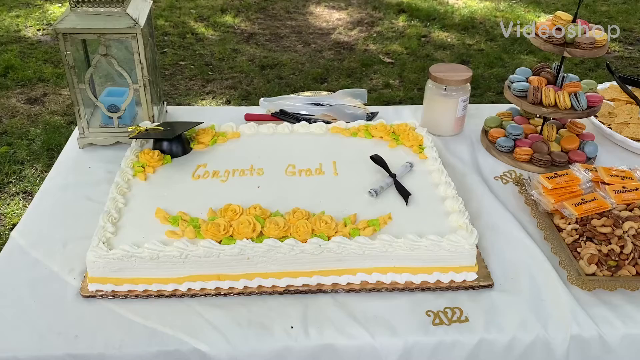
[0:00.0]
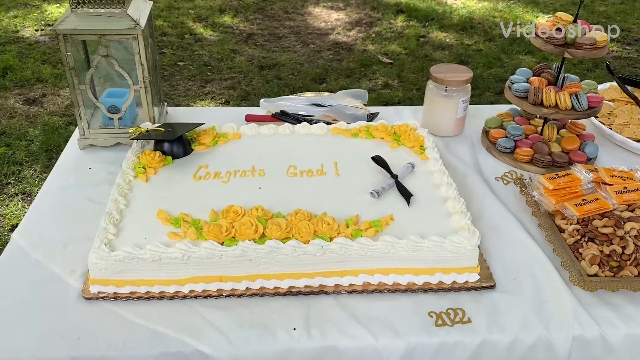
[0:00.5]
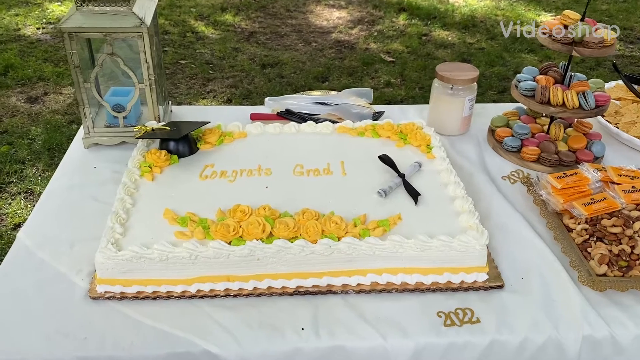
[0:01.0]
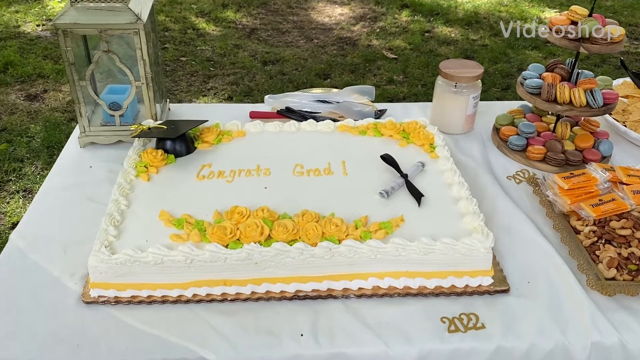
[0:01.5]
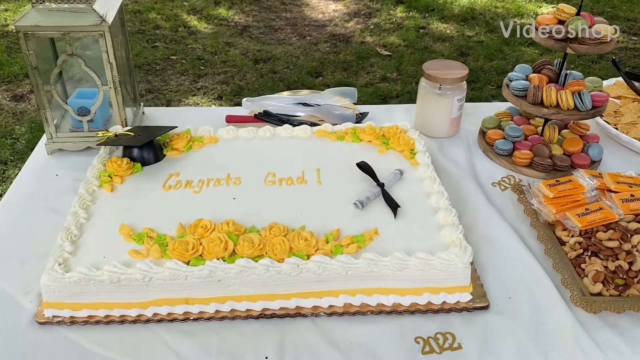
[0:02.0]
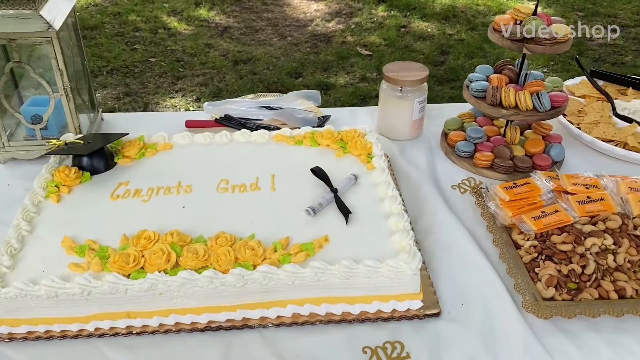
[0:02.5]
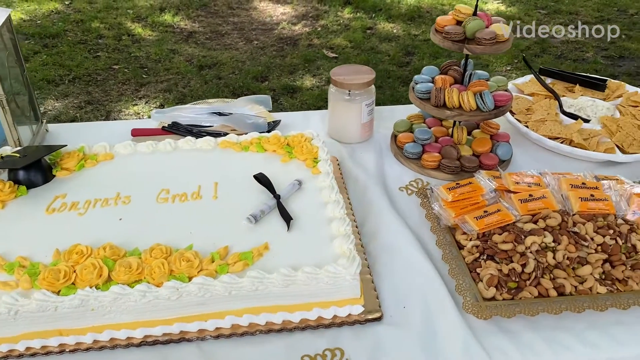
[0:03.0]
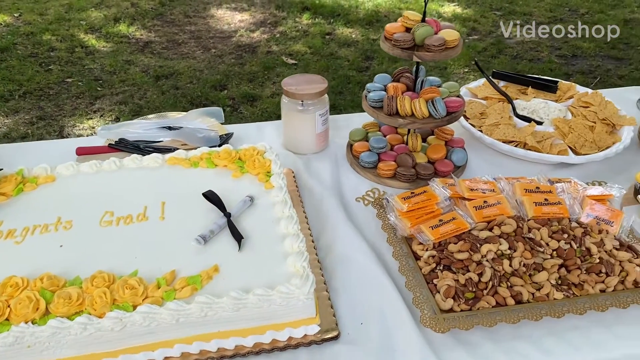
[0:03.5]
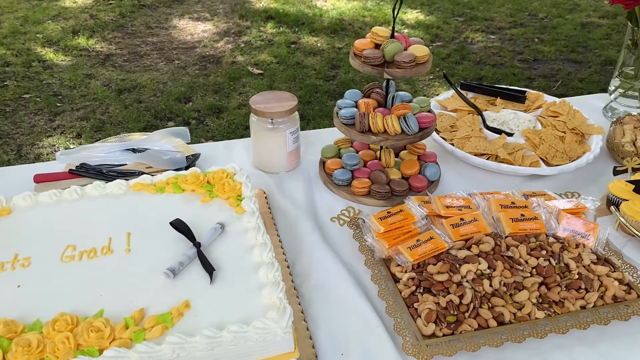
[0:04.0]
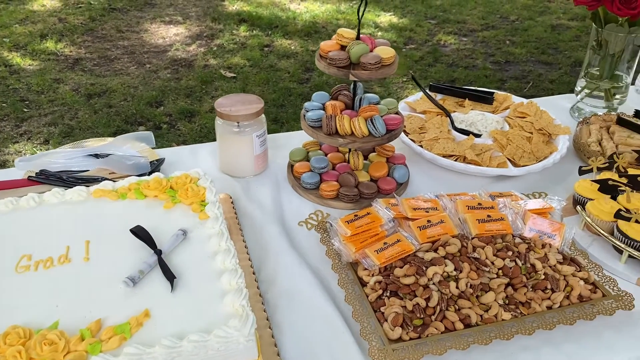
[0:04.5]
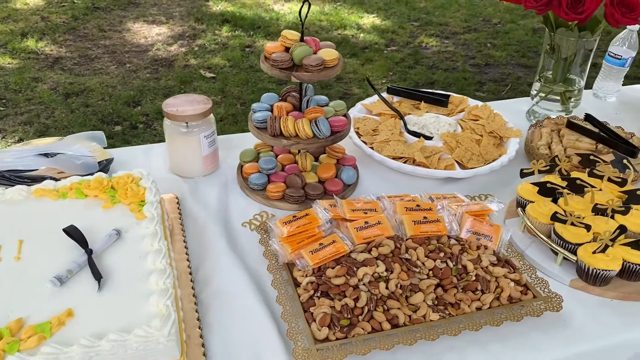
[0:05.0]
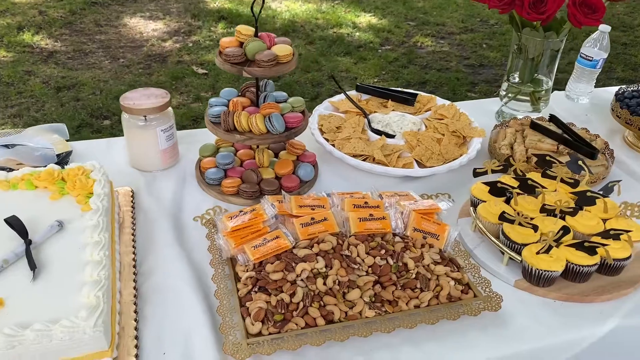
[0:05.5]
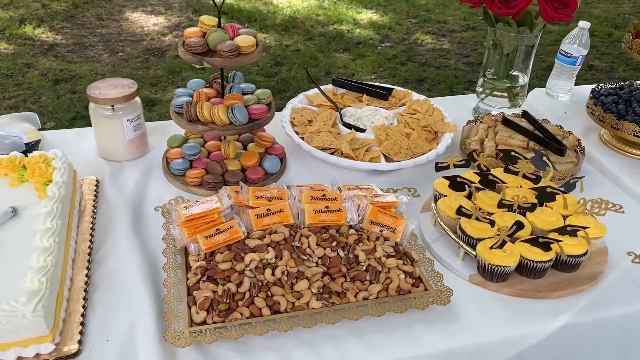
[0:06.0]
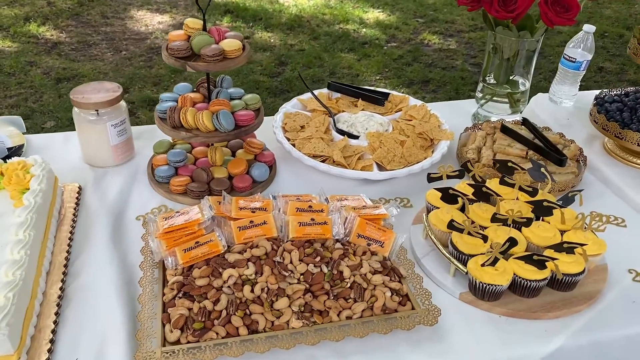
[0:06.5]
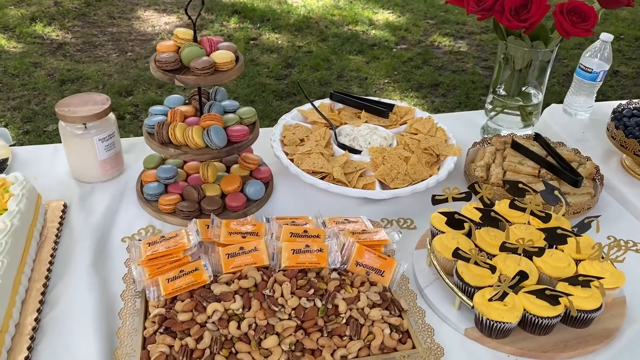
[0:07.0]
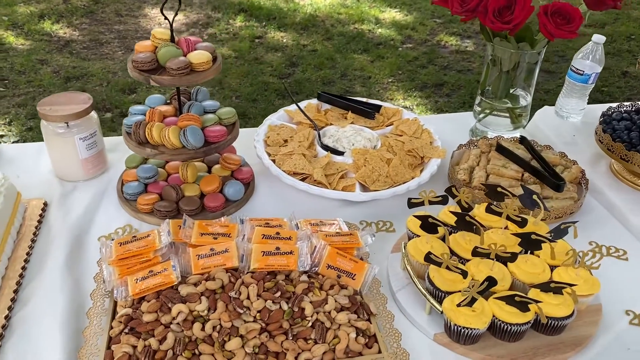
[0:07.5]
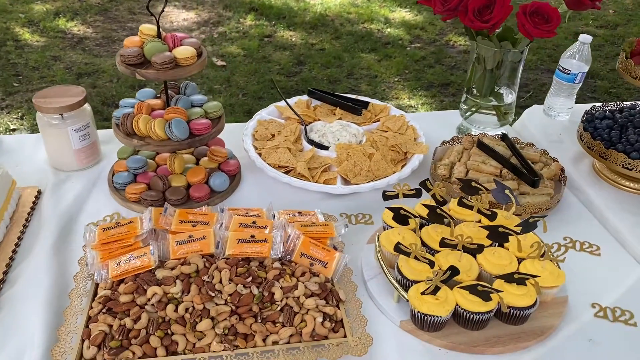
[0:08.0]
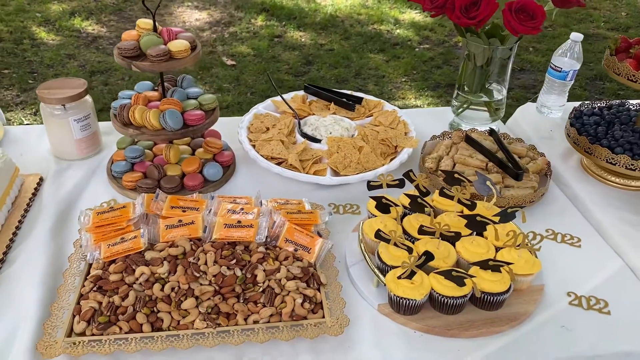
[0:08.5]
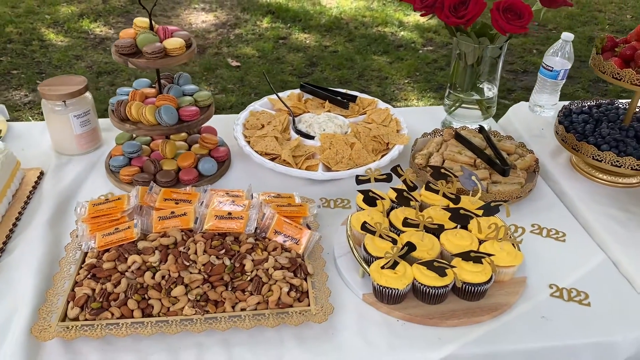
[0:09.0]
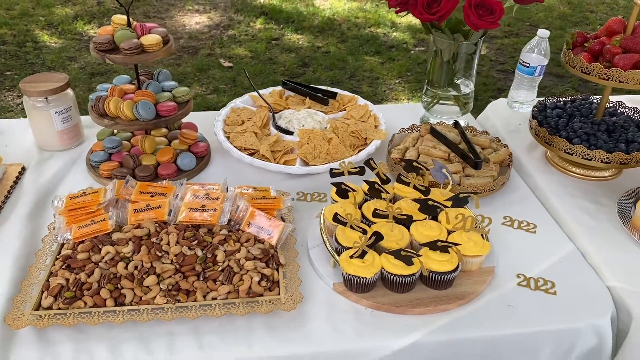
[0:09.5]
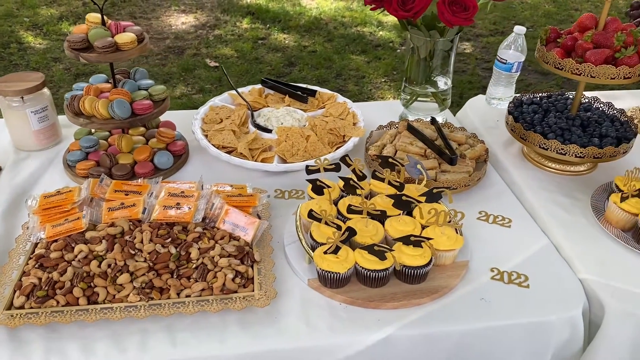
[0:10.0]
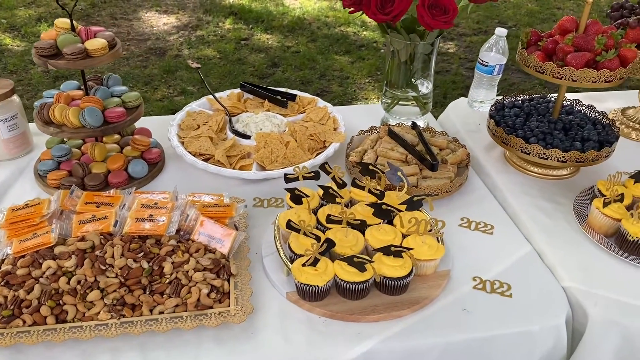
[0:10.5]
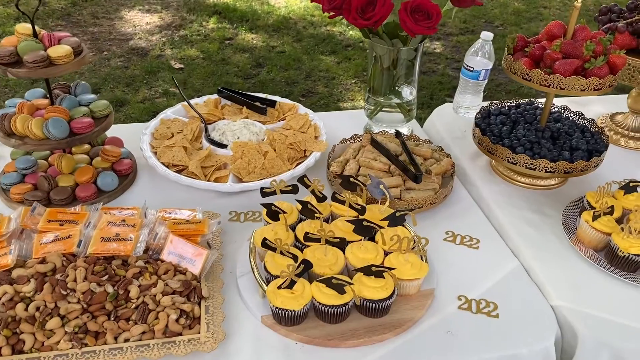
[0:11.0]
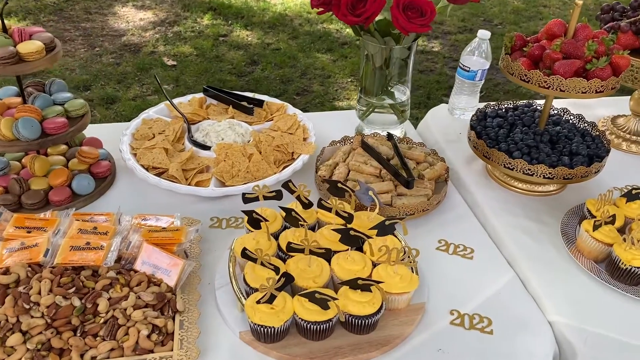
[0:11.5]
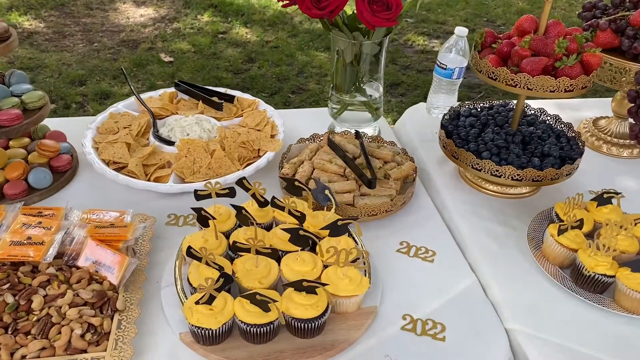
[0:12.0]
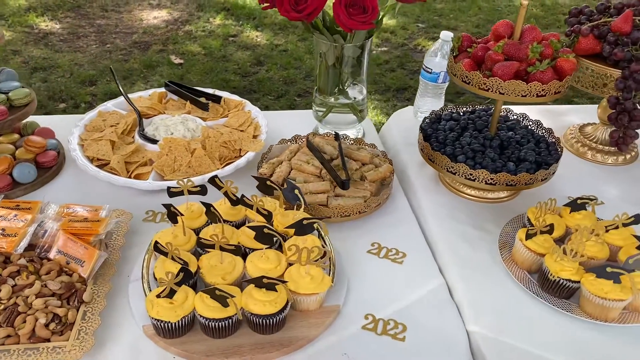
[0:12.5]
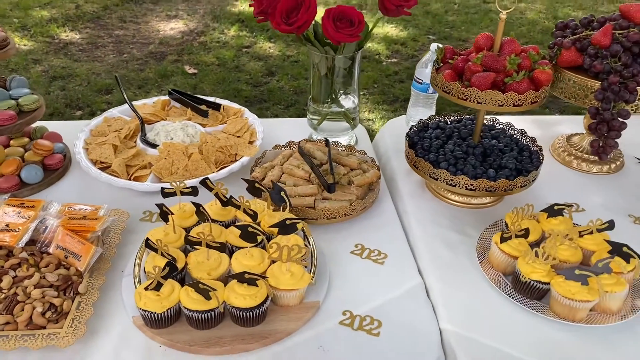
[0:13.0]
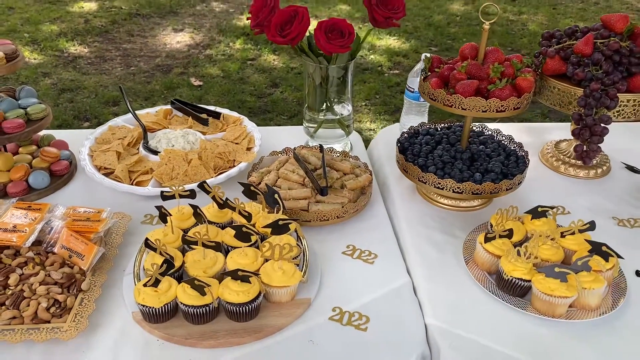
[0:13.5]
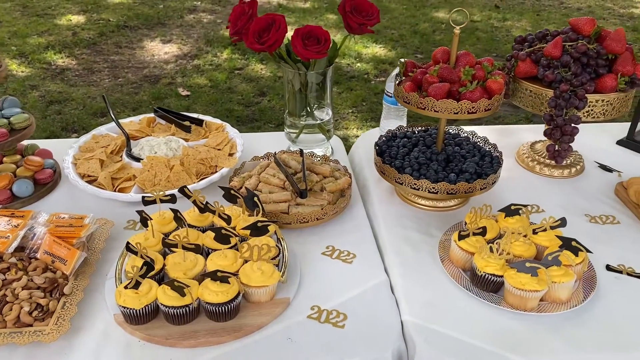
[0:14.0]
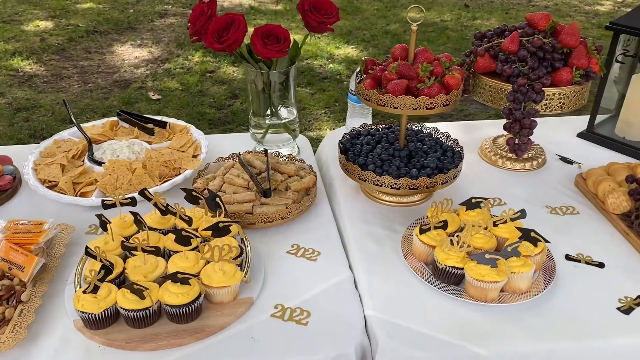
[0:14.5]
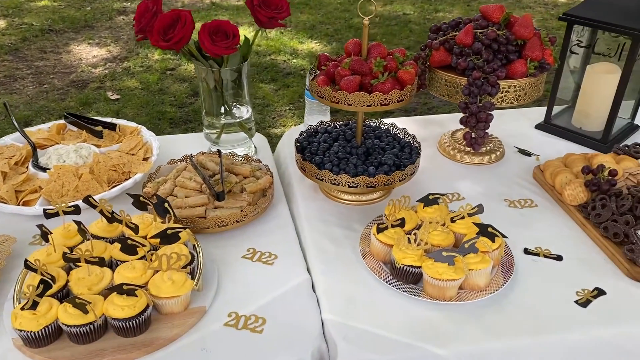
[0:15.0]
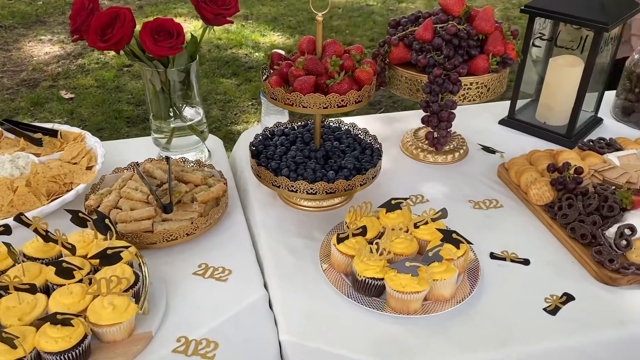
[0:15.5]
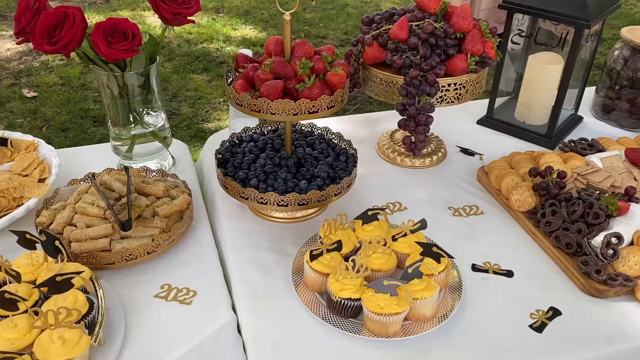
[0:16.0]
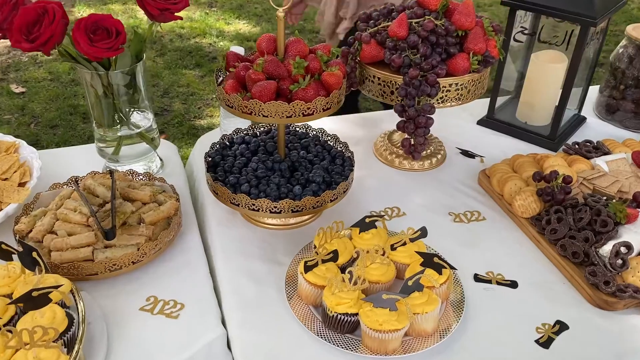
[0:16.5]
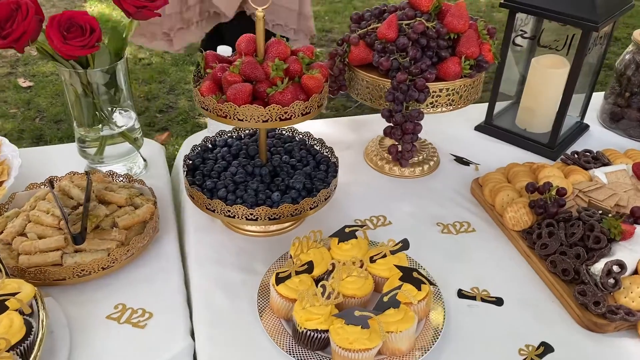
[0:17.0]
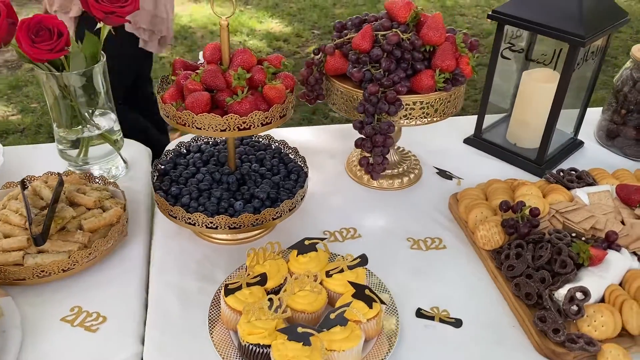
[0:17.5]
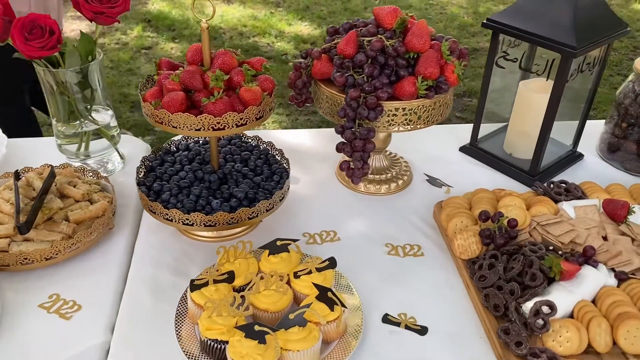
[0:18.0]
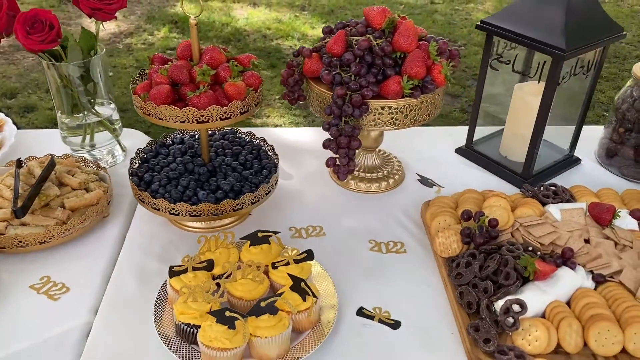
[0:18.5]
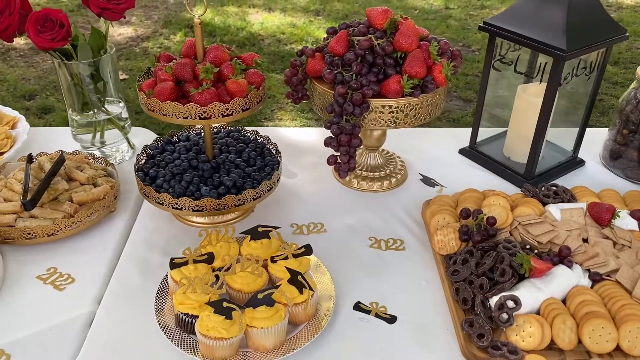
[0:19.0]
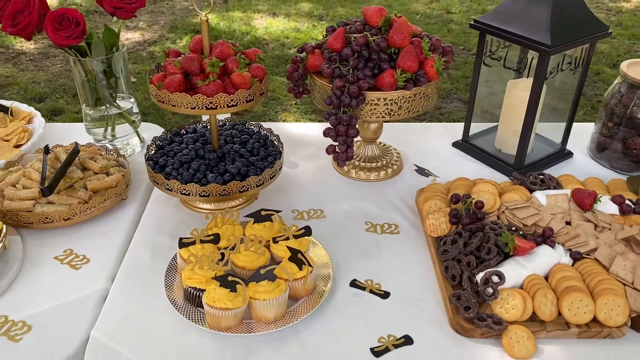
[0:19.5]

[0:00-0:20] A white and yellow cake reads "congrats grad." It is decorated with yellow flowers, and in the top left corner there is a graduation cap along with a diploma. The cake is on a table with other goodies: nuts, cookies, cupcakes, potato chips, fruits, drinks, and the year of the graduation. It looks like a graduation party, with decorations for the refreshments. The graduation year is sprinkled on the table in gold, decorating it. The setting appears to be outside, with grass visible in the background, and the colors shown are yellow and black. People can be seen kind of walking by in the background. What appear to be lanterns are on the table, along with some flowers.